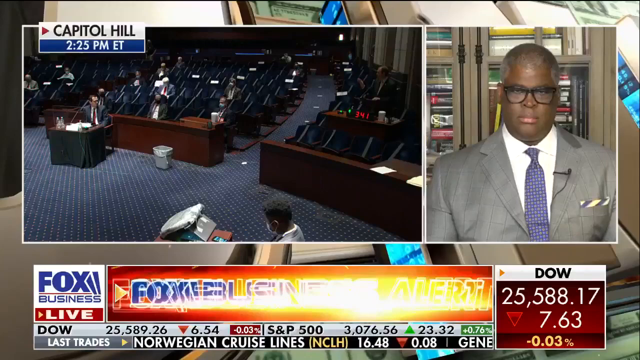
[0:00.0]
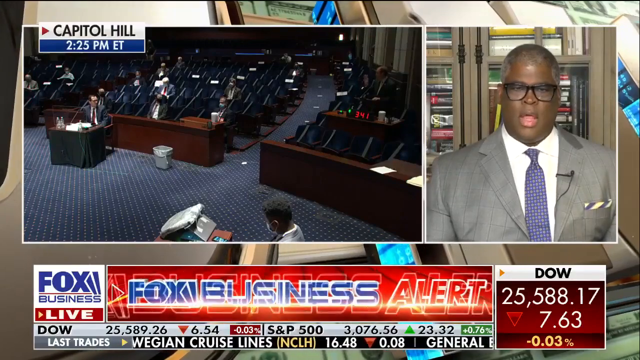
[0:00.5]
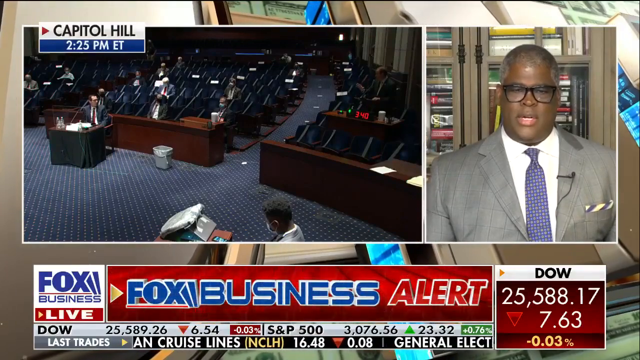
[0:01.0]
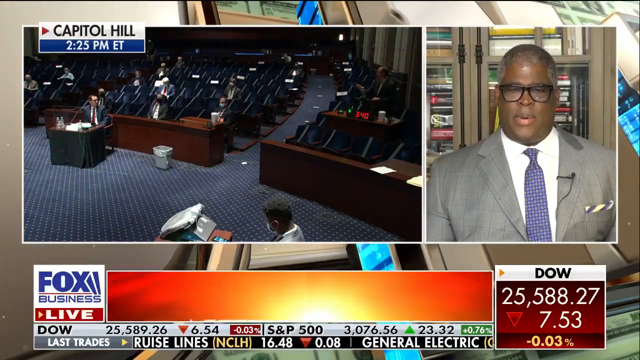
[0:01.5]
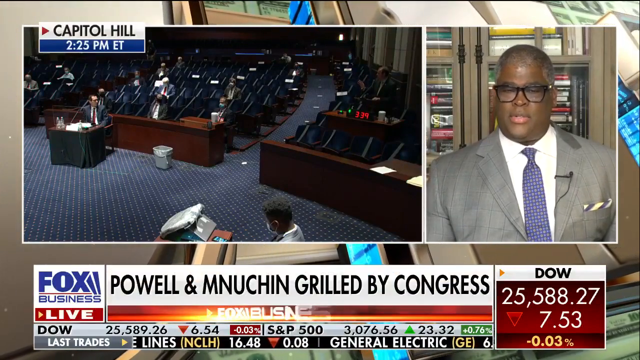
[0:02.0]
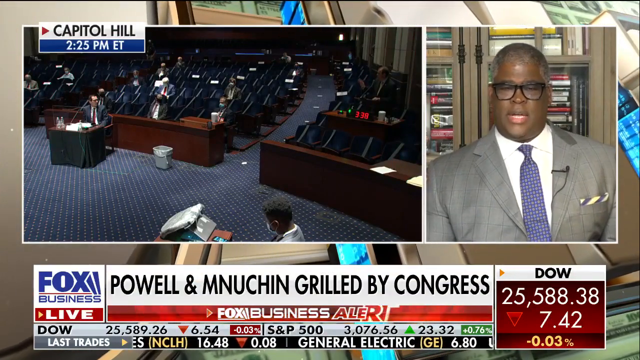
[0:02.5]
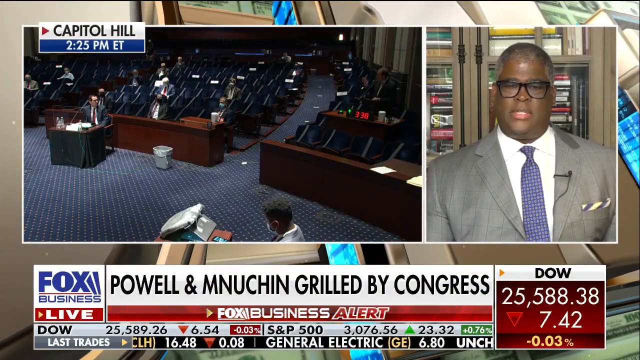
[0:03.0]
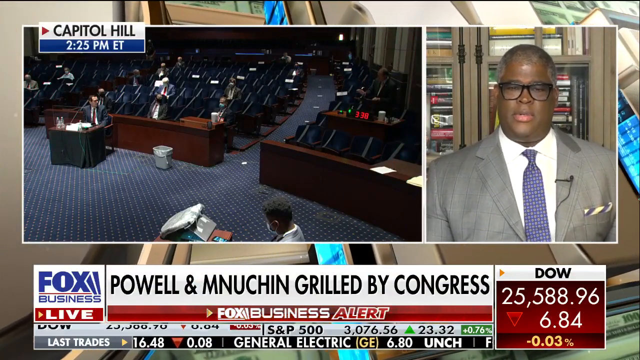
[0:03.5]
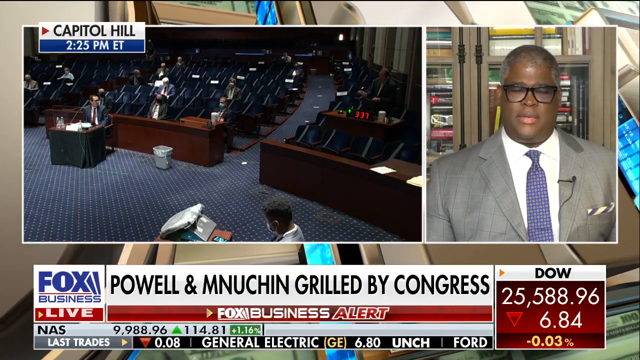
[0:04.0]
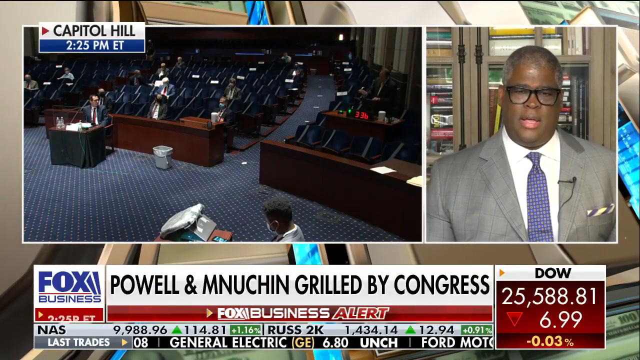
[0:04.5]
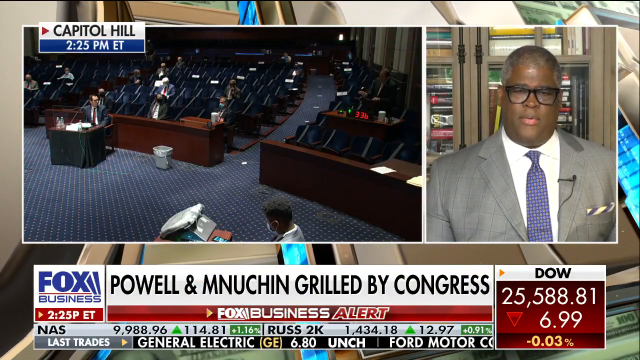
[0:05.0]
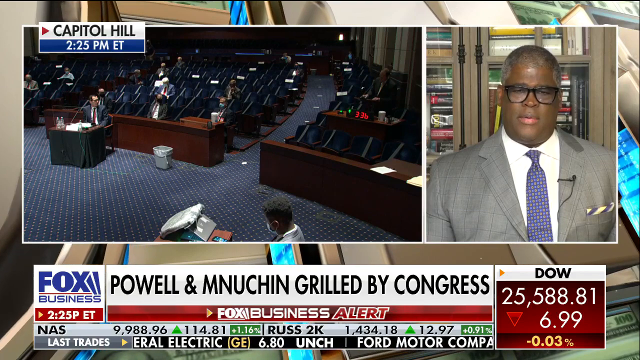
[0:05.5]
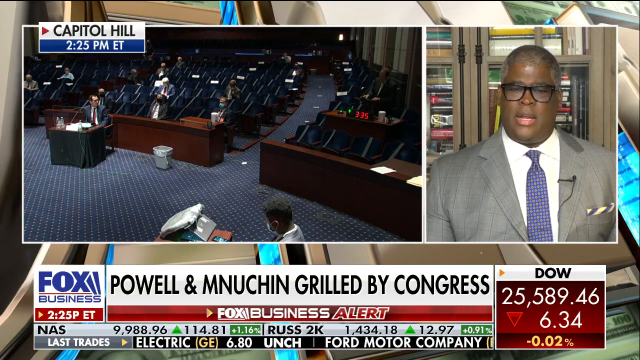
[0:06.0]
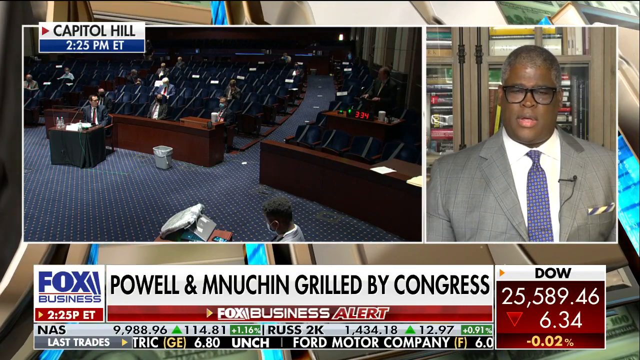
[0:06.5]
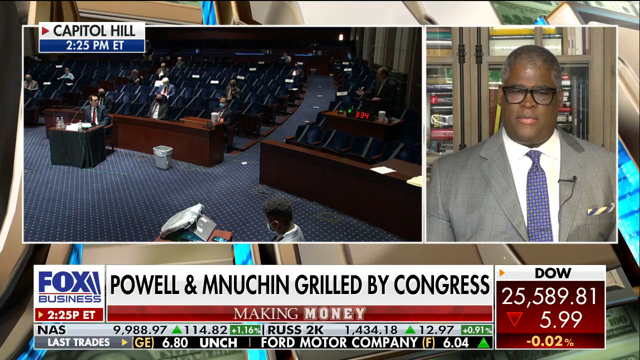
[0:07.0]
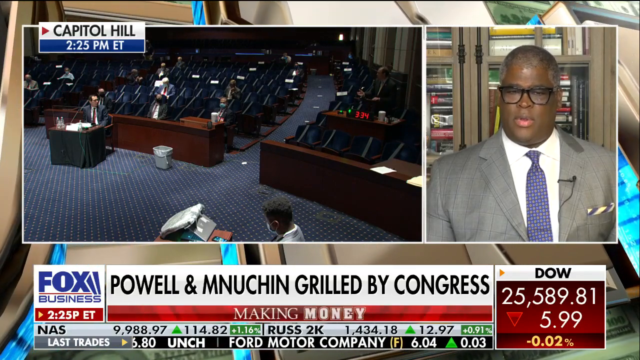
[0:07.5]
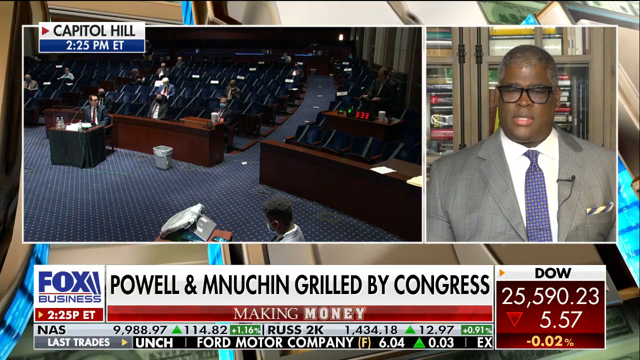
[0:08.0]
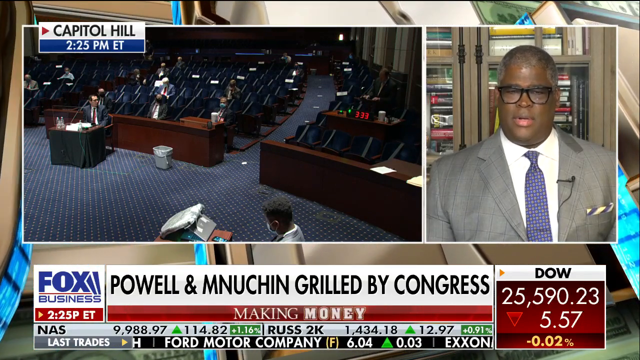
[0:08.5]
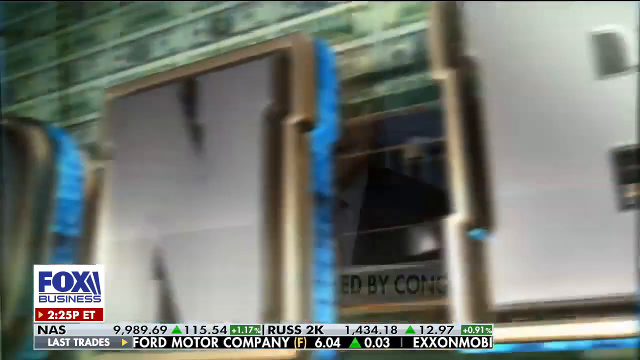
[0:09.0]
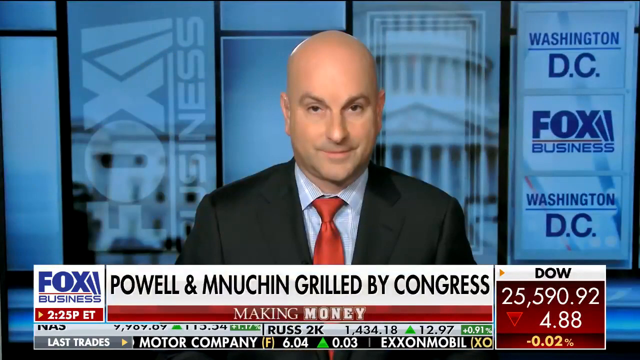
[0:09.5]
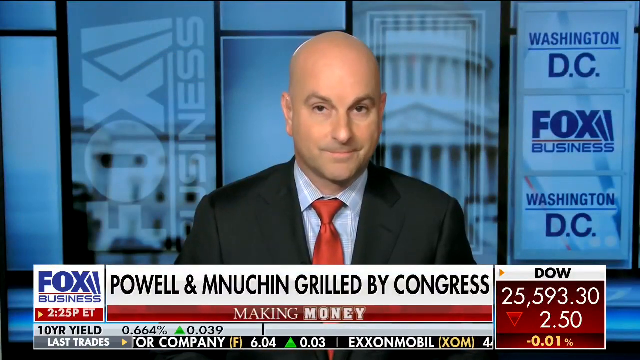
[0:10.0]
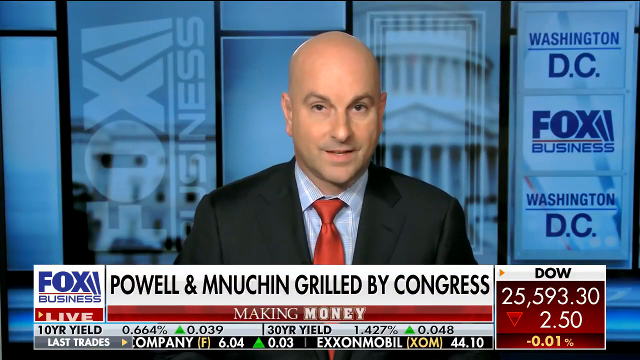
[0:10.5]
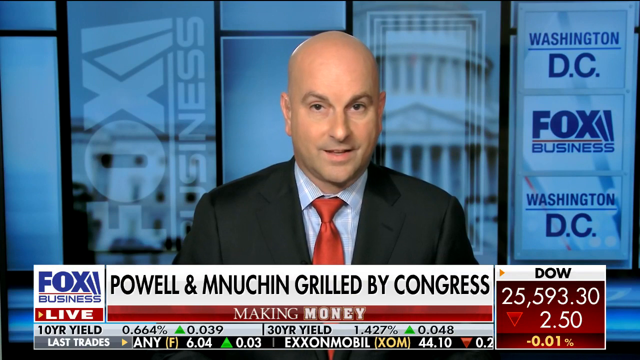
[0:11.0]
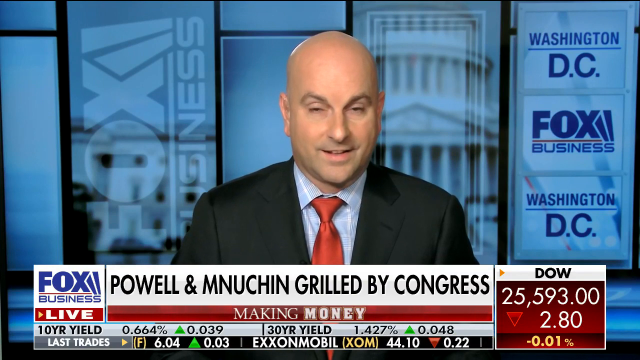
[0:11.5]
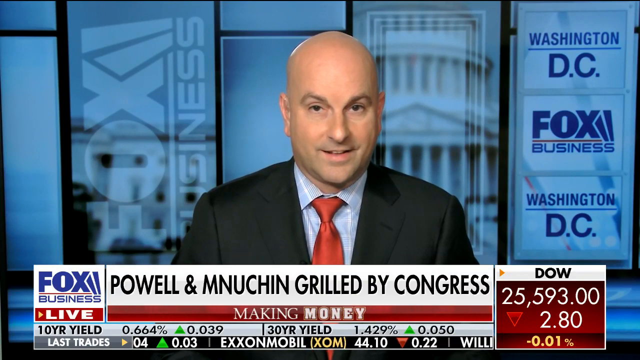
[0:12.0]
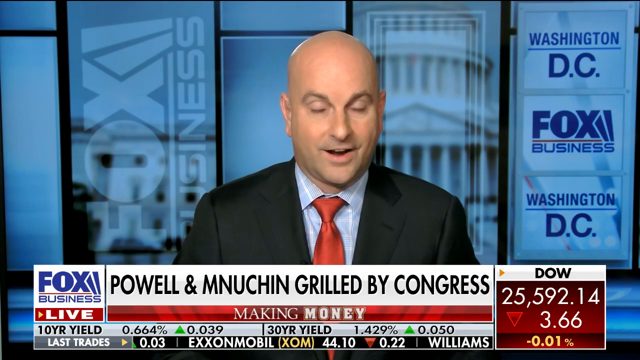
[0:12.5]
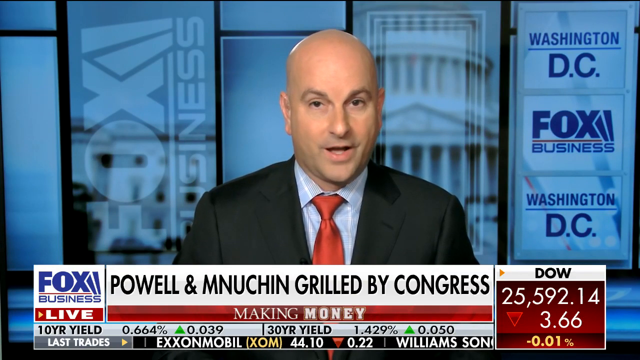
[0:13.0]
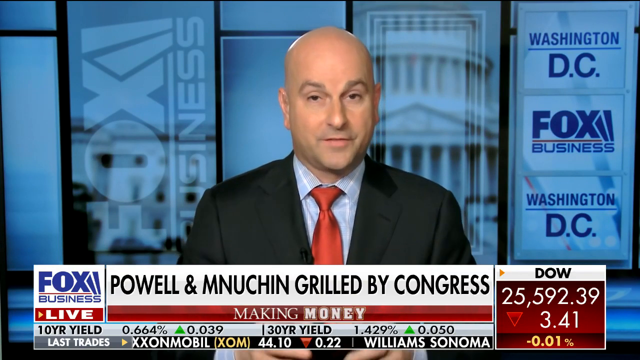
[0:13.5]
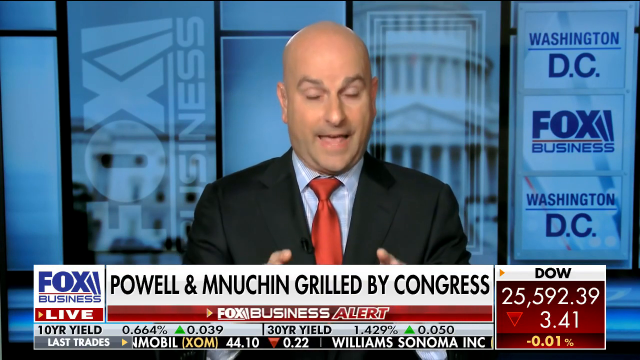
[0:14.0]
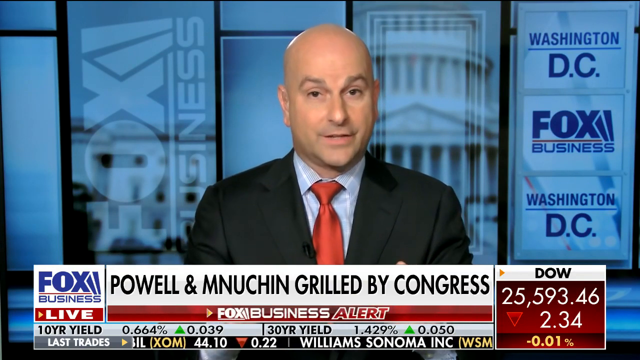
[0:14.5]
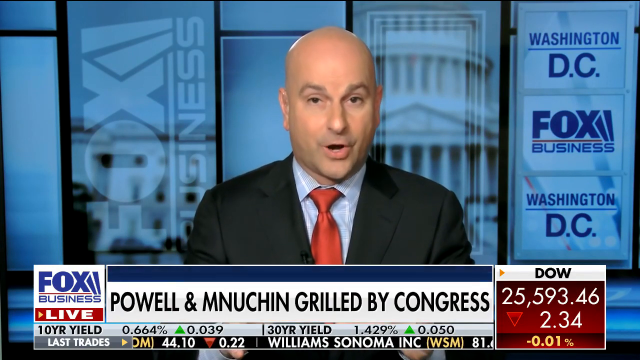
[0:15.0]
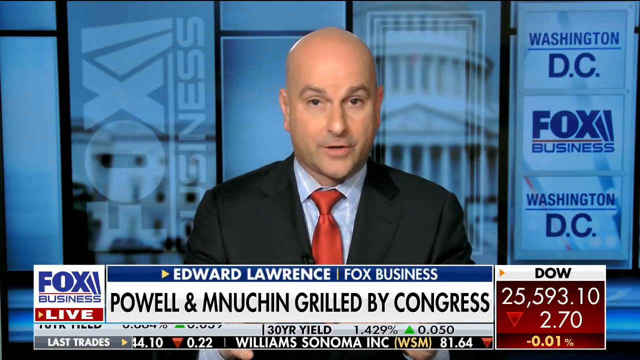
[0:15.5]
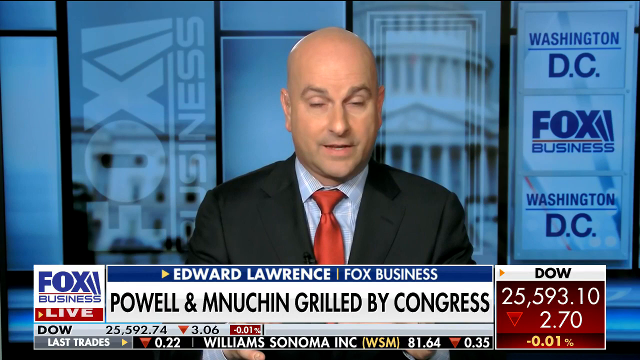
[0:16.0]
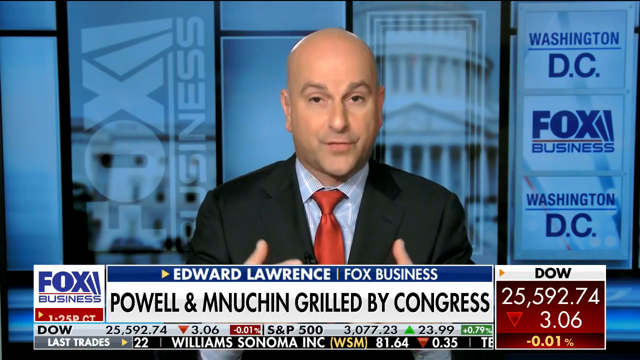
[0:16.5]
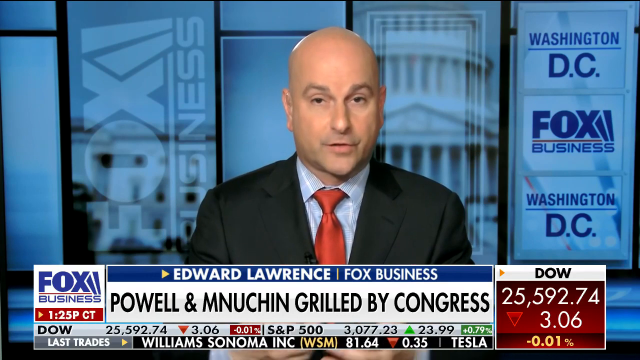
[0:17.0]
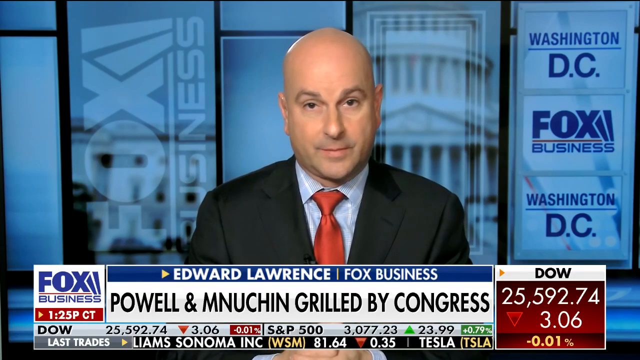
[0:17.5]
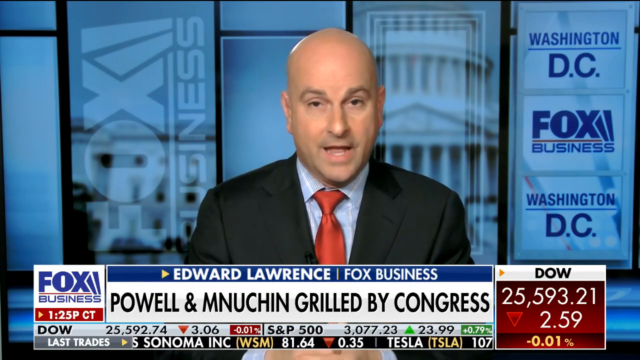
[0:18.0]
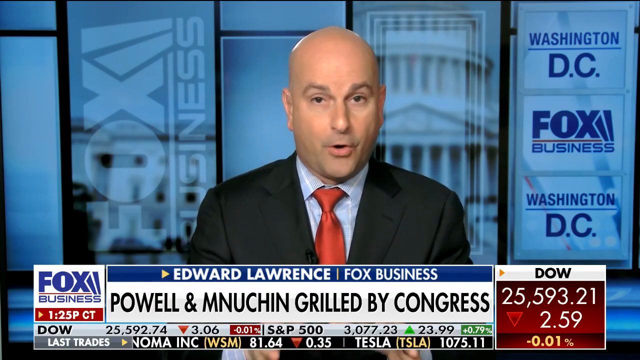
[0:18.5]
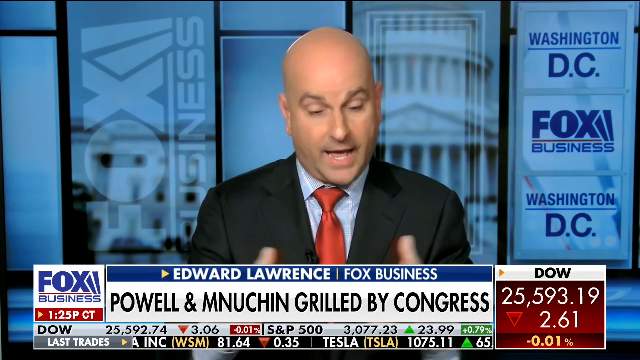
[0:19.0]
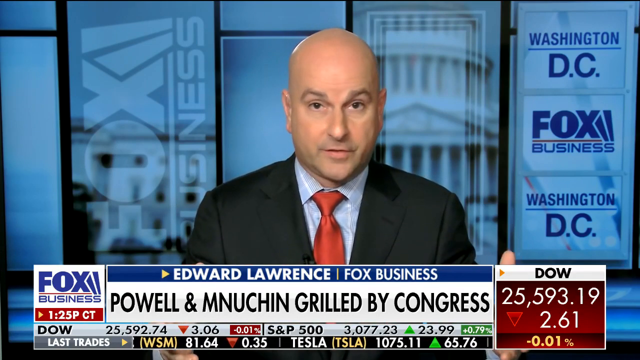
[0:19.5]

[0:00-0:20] The video is from Fox Business. The setting appears to be some sort of Congress or parliament building. A black news reporter wears a gray suit, a white shirt and a blue tie, along with glasses and a lapel microphone on his blazer; he has a little bit of hair on his head. At the bottom is the headline "powell and Mnuchin grilled by congress". The video then transitions to a different reporter, a bald white man in a black suit, a red tie and a white shirt, identified as Edward Lawrence, Fox Business. Along the bottom of the screen are the latest stocks.